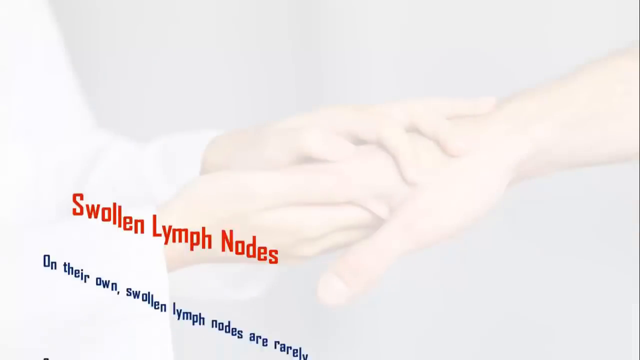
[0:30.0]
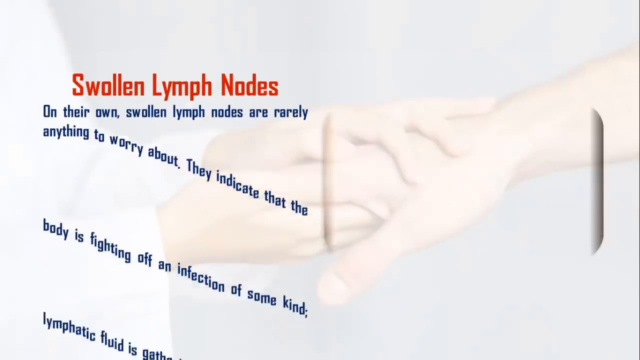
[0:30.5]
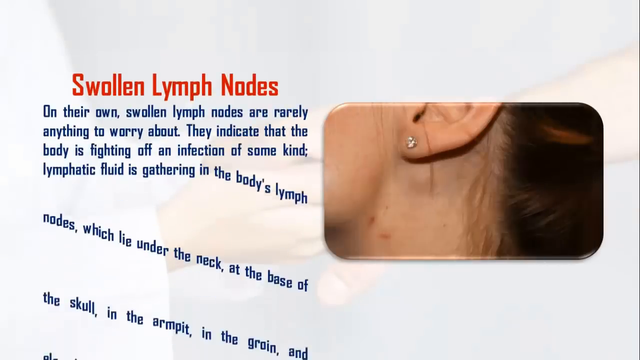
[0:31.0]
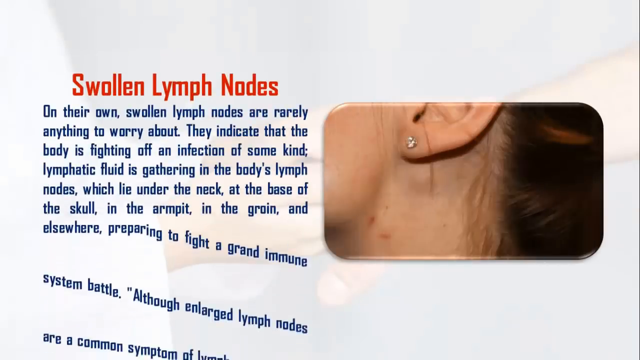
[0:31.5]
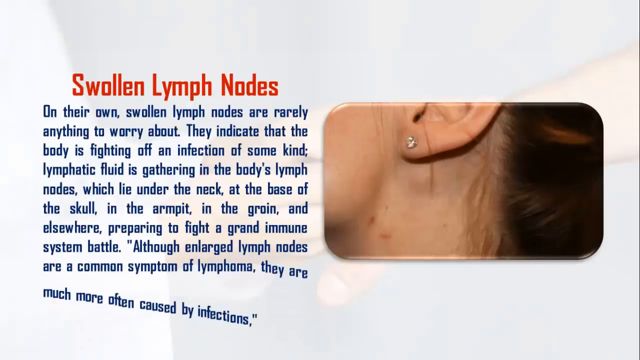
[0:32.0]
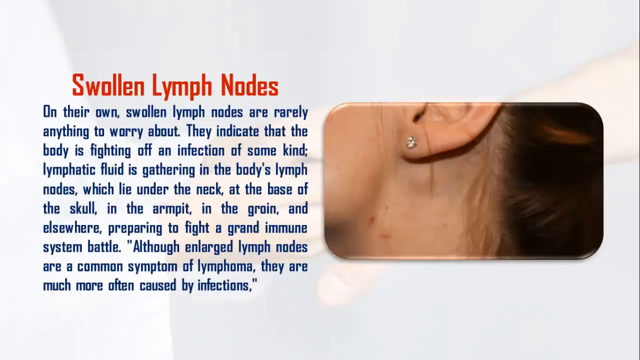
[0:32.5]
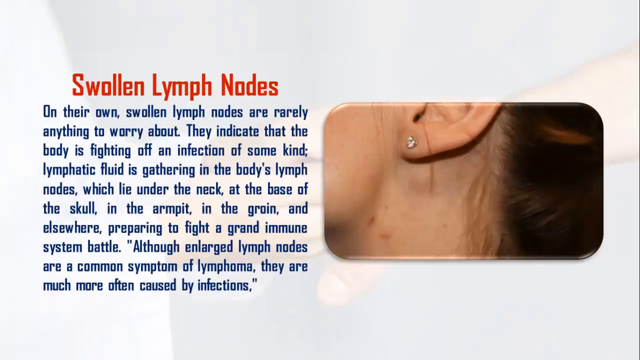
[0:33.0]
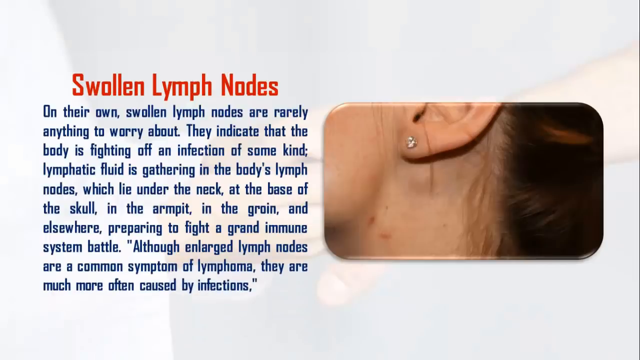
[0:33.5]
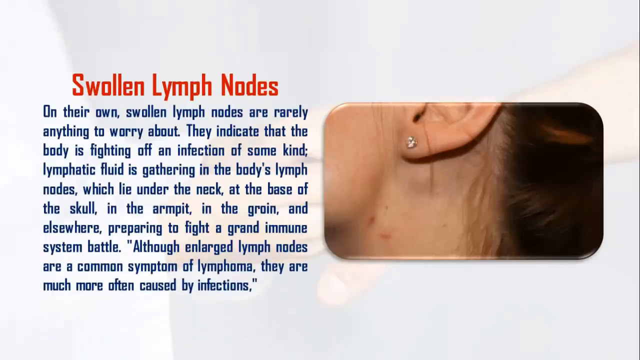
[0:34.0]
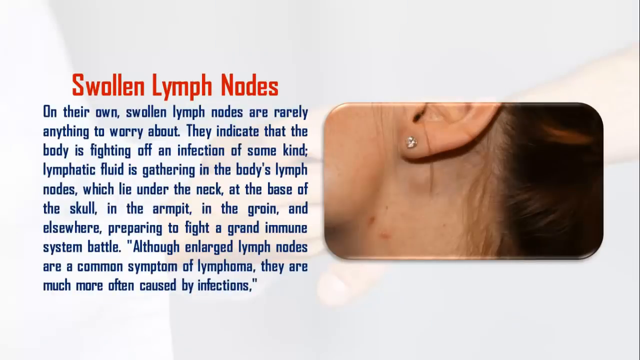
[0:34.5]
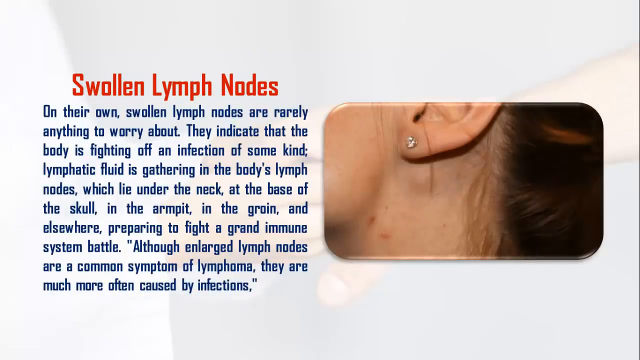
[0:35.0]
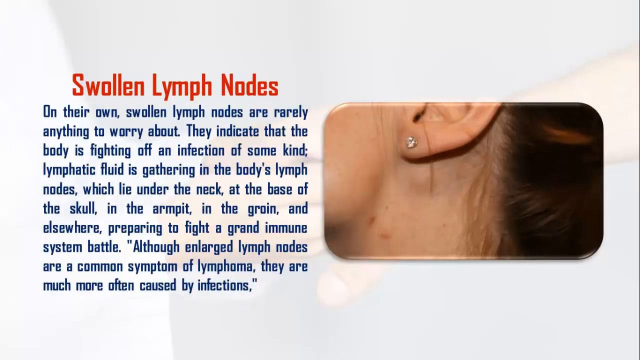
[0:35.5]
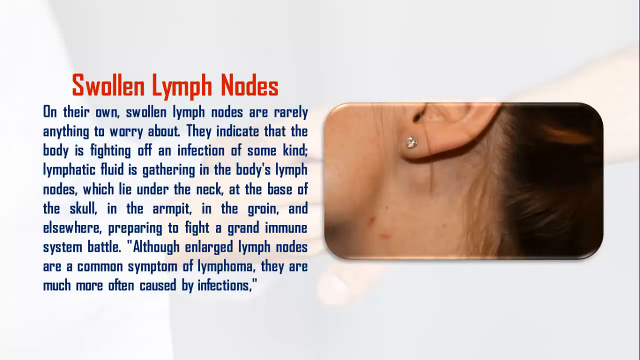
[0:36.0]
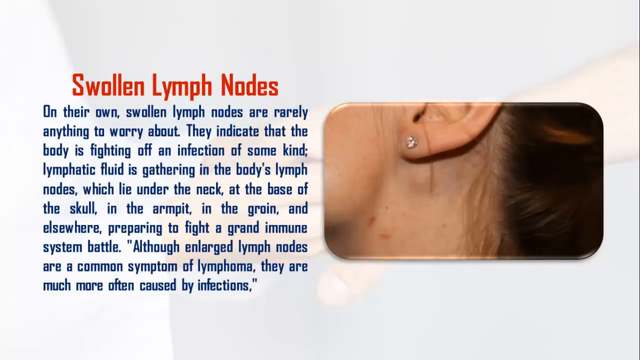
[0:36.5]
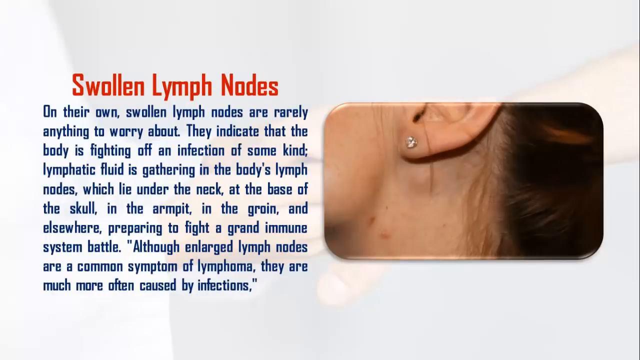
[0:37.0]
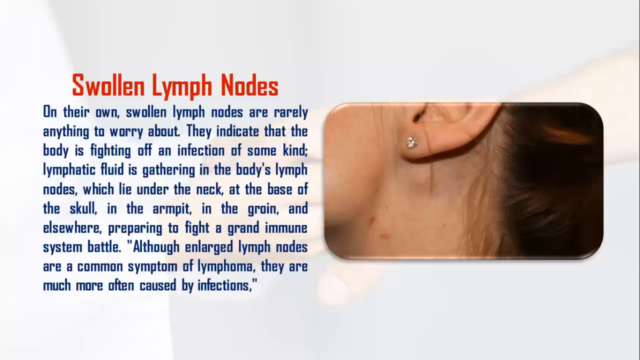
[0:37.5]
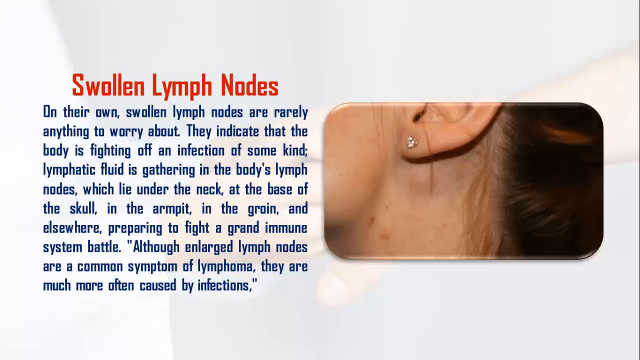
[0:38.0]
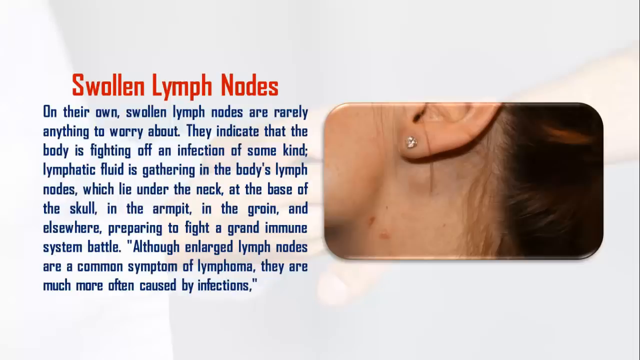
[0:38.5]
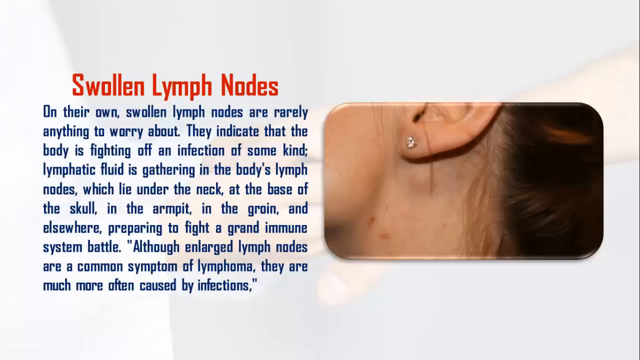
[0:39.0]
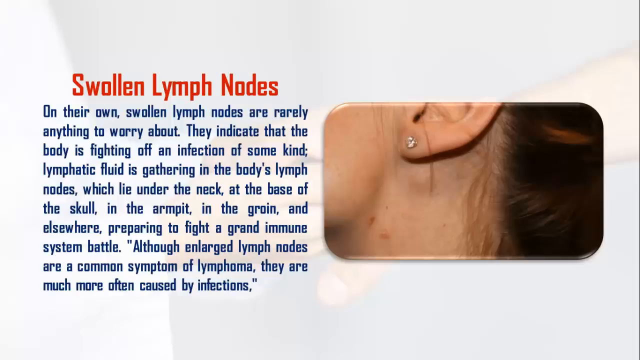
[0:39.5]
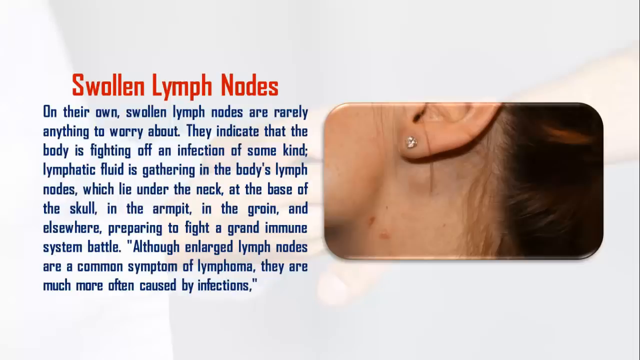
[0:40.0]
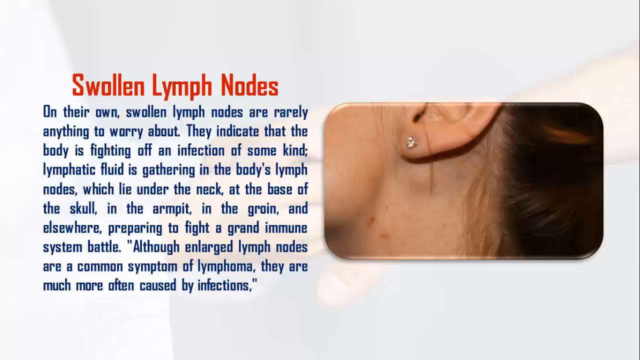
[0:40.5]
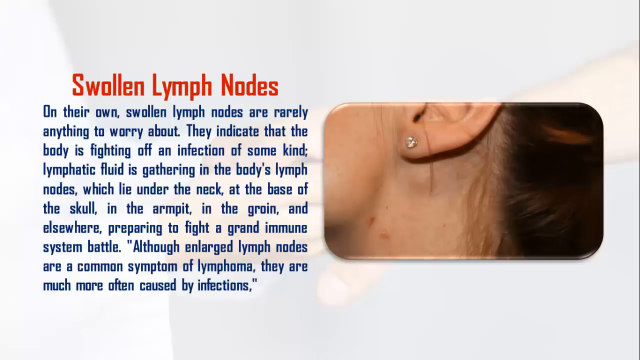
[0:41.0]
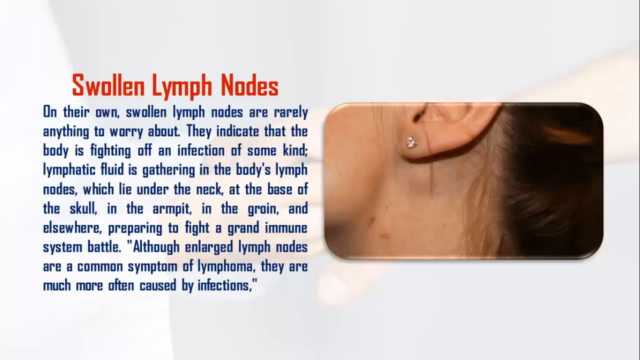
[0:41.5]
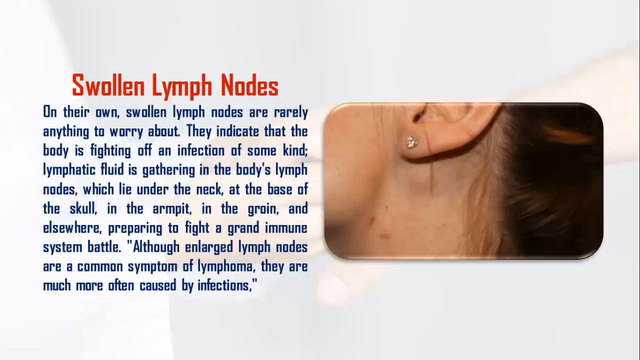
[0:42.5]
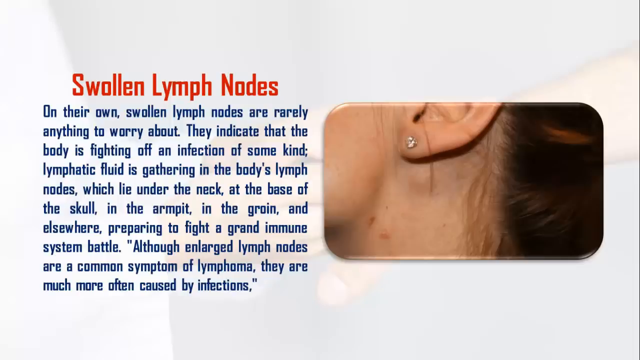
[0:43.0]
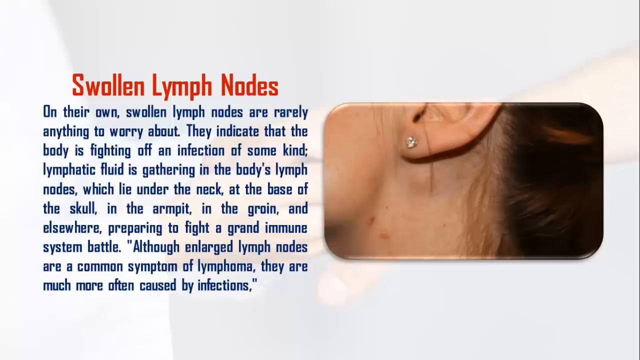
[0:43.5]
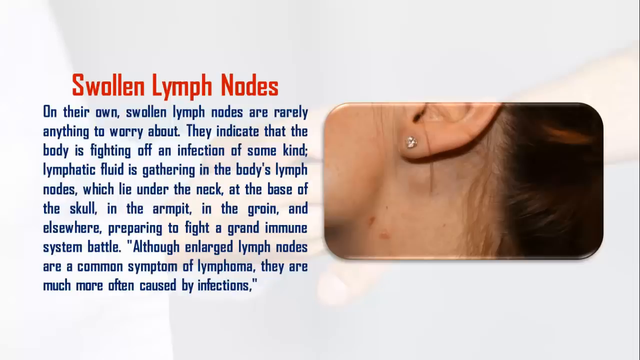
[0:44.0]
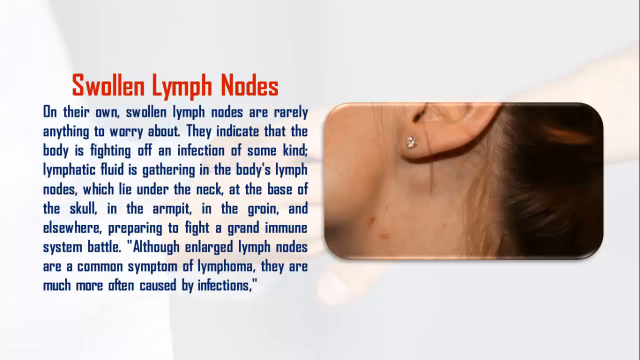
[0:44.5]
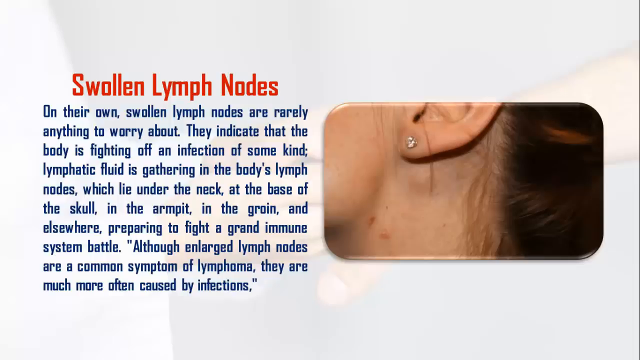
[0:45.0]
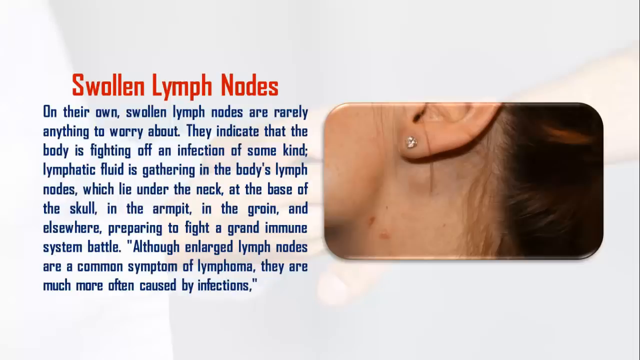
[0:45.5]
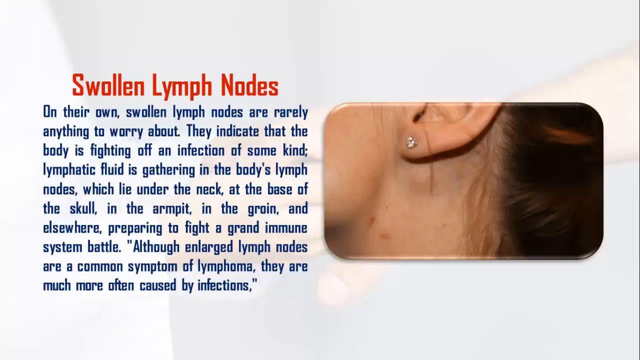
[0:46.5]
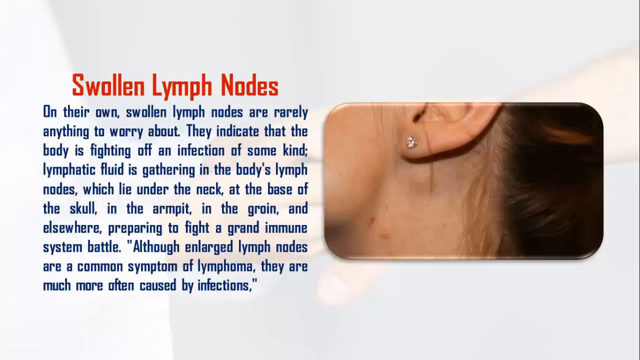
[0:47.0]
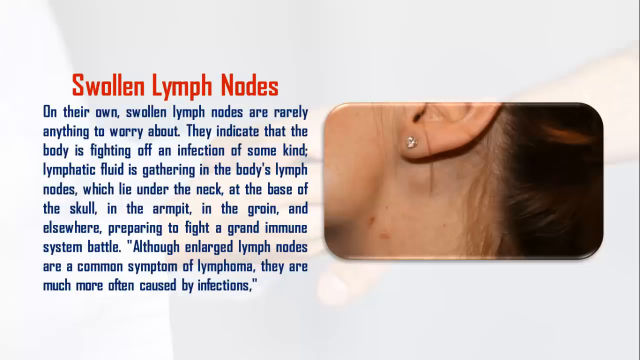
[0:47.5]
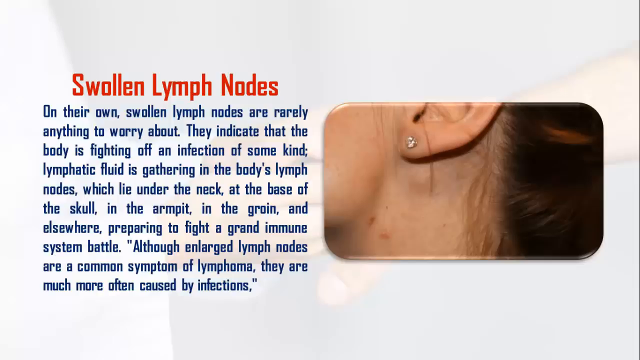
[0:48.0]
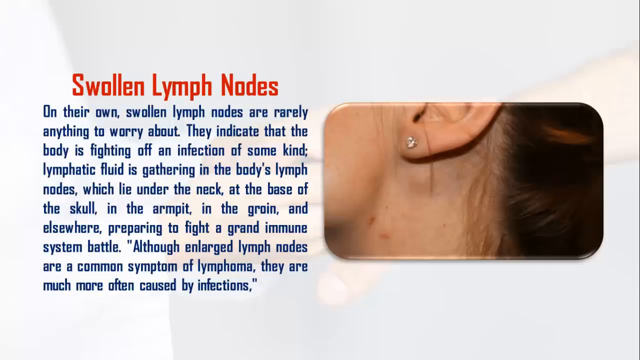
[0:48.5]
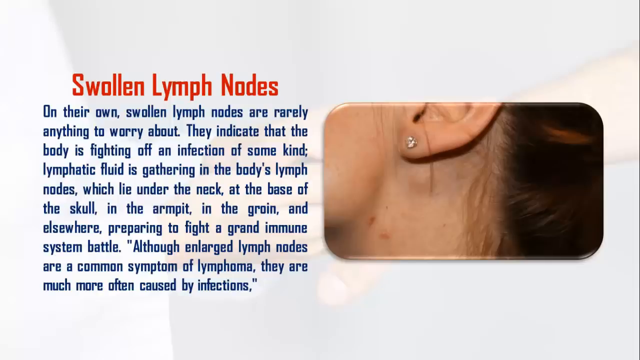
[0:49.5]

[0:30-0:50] The picture disappears and words start appearing, looking like they come from underneath. The background is still kind of fuzzy, with a white lab jacket visible on the left and two hands, one from the left and one from the right, holding each other. On the right side, about midway, is an image of part of a woman's face, neck and ear, apparently the left side. Her long brown hair is pulled back, exposing her neck and ear. She wears a small diamond earring, there are a couple of dark marks on her neck that look like moles, and there is a little lump behind the ear, her lymph nodes. To the left, large red letters at the top read "swollen lymph nodes." Underneath, blue writing reads: "On their own swollen lymph nodes are rarely anything to worry about. They indicate that the body is fighting off an infection of some kind. Lymphatic fluid is gathering in the body's lymph nodes which lie under the neck, at the base of the skull, in the armpit, in the groin, and elsewhere preparing to fight a grand immune system battle. Although enlarged lymph nodes are a common symptom of lymphoma, they are much more often caused by infections."